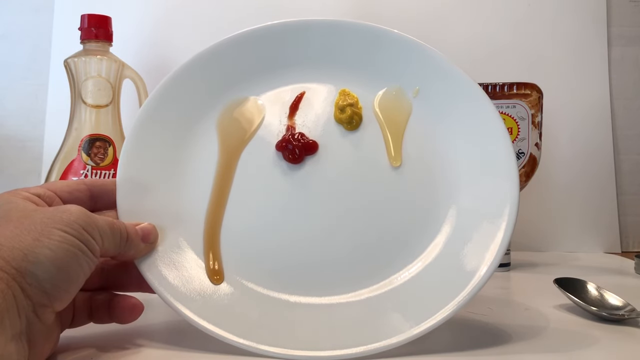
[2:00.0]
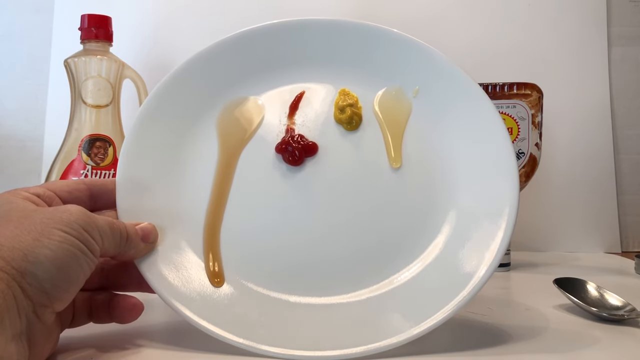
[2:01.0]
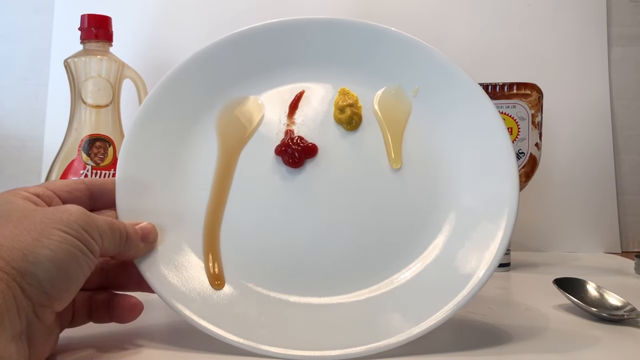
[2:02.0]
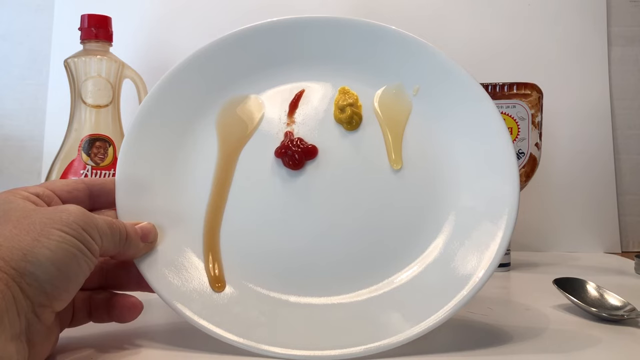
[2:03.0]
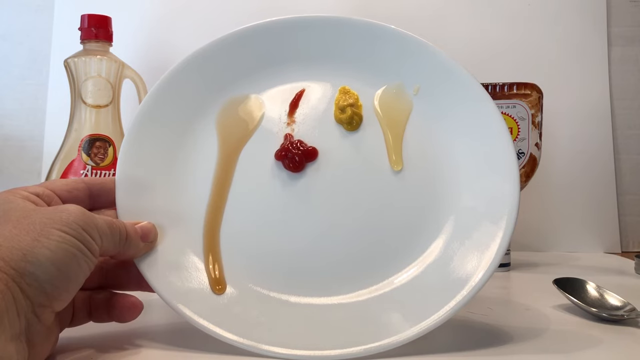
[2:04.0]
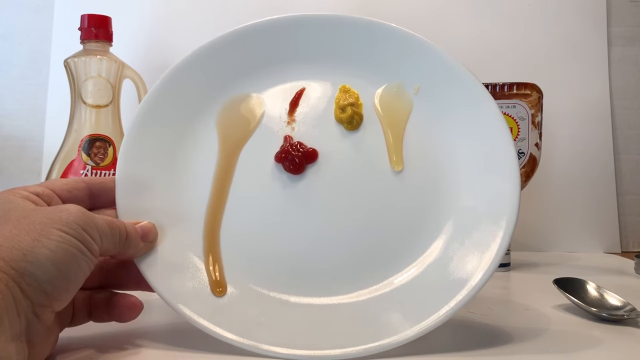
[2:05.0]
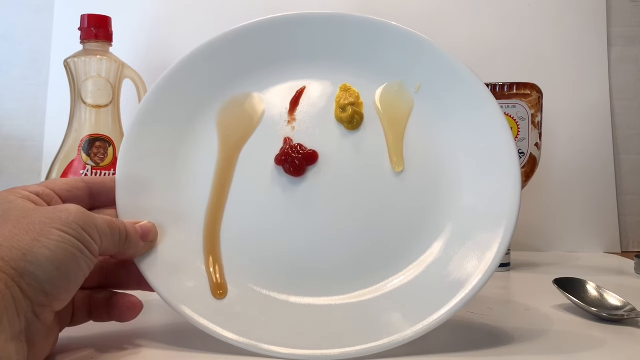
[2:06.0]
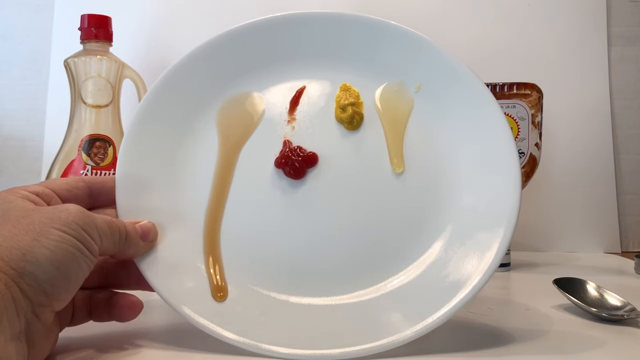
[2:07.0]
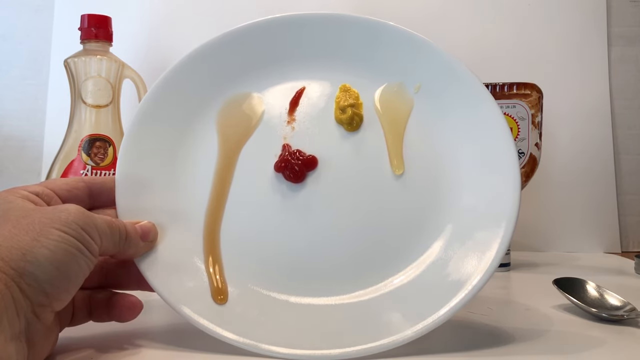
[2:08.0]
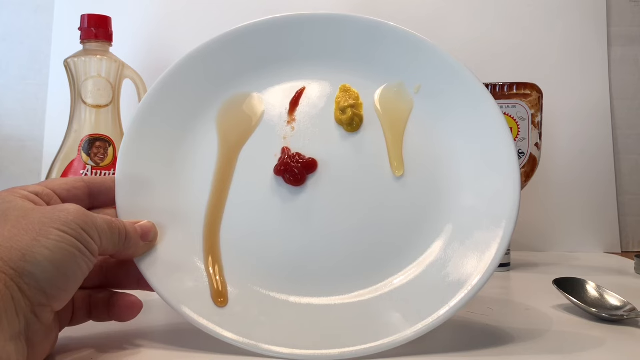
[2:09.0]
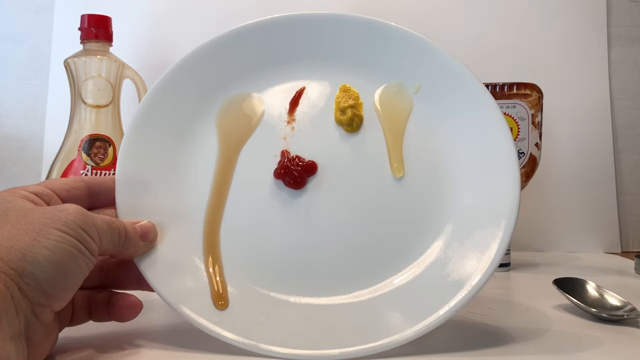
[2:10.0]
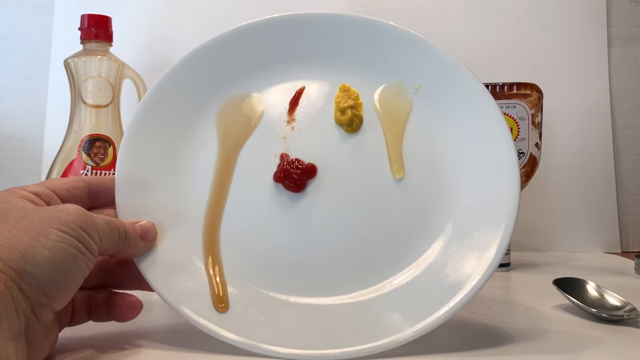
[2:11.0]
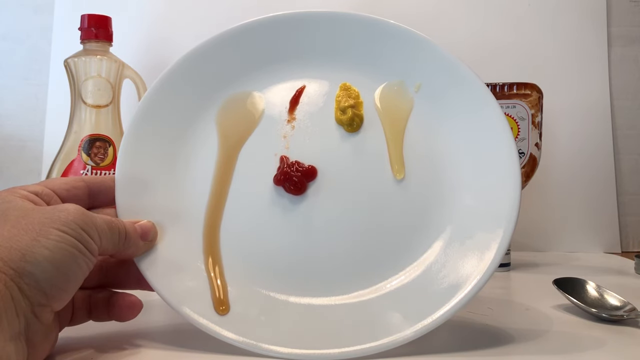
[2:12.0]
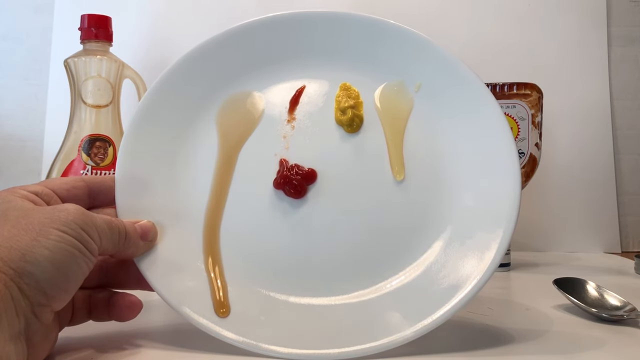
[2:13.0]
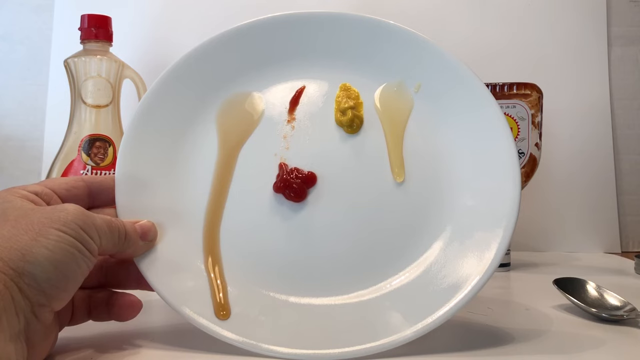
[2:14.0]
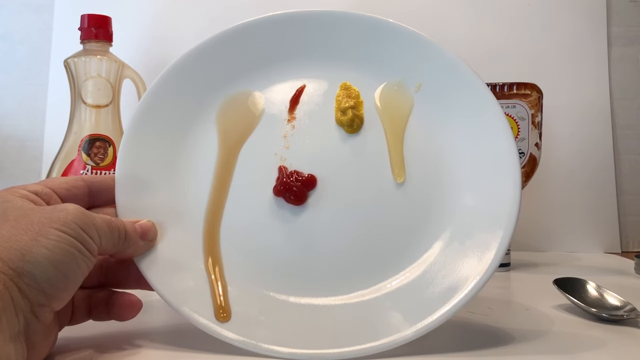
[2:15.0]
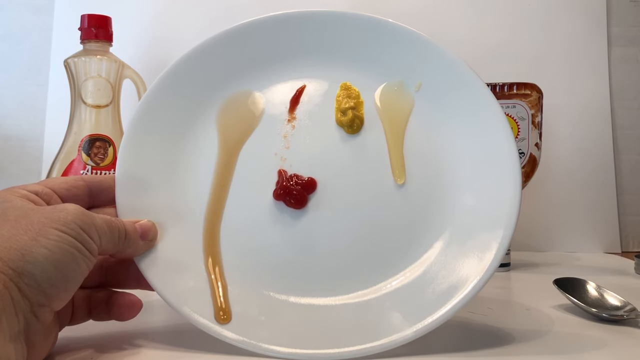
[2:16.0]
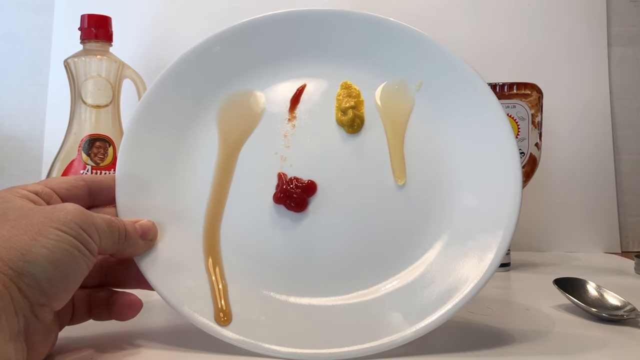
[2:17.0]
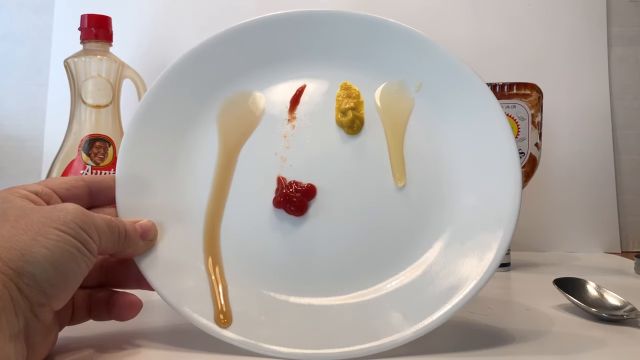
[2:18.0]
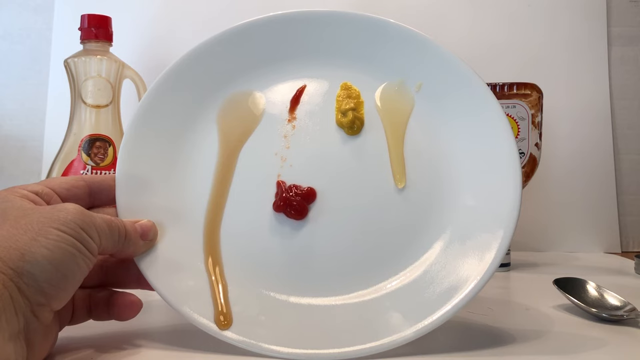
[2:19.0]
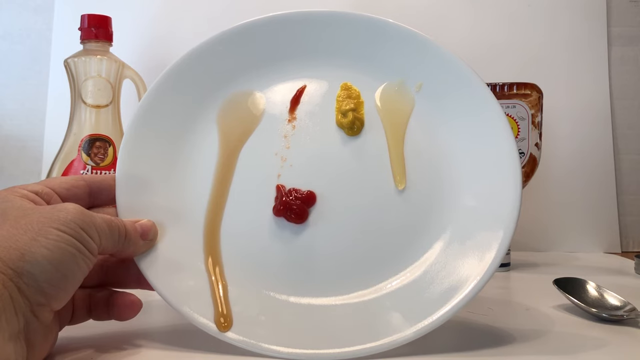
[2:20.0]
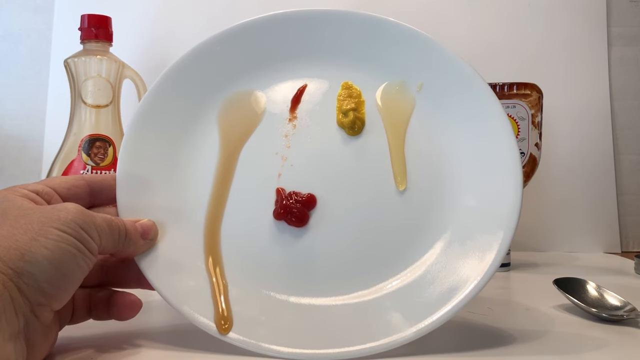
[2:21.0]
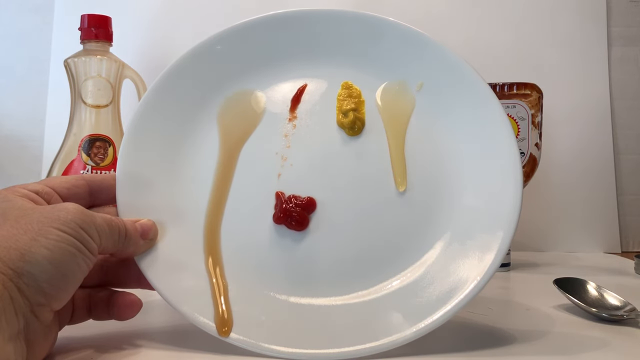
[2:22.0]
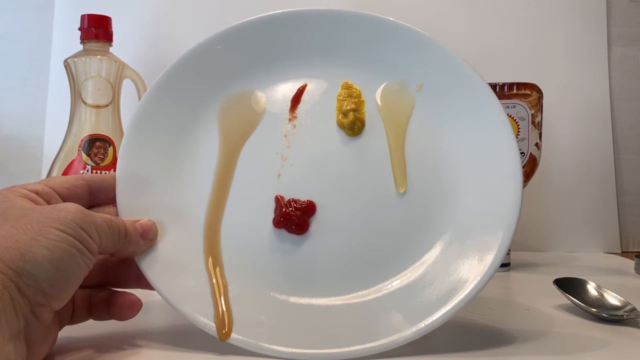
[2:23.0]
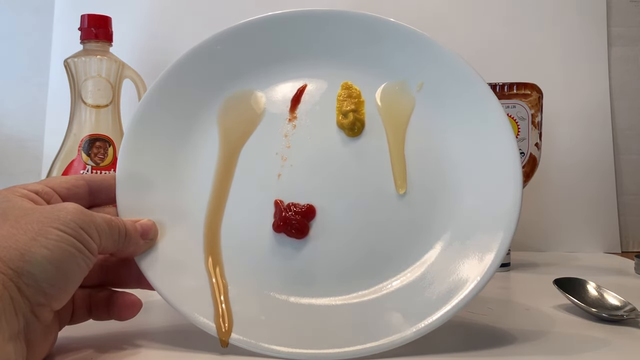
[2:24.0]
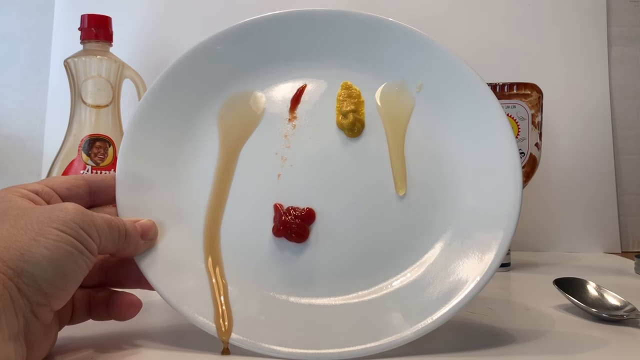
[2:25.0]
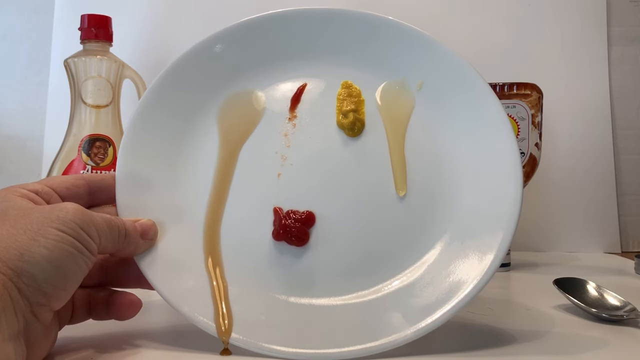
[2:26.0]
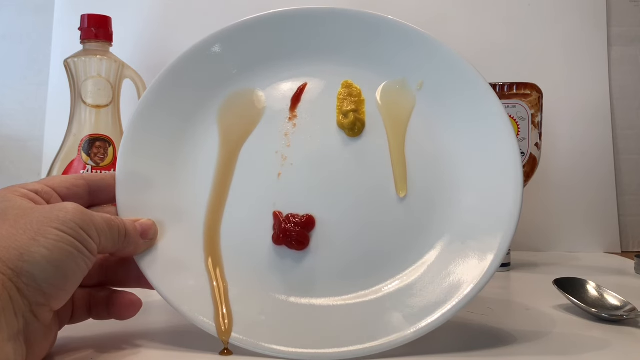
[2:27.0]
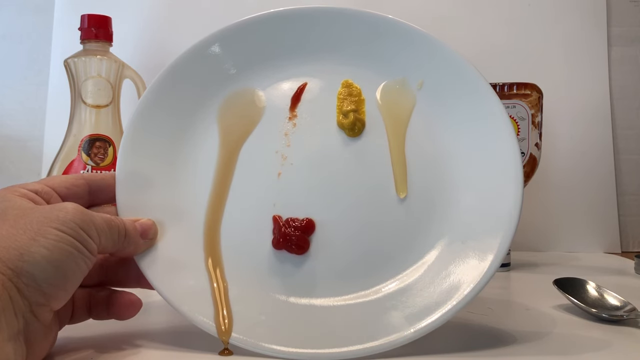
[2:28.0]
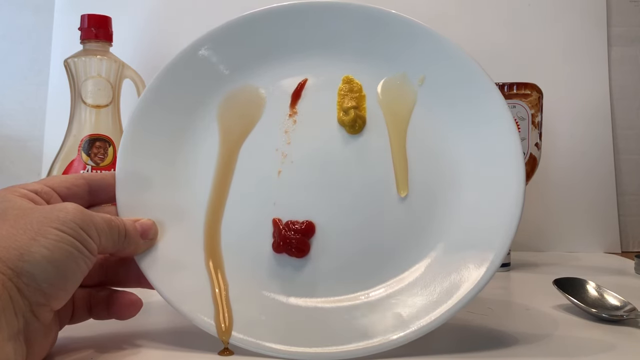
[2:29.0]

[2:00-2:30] The man holds the plate from the bottom left corner with his left hand. The syrup is partially hidden by his hand, the mustard and honey are completely hidden by the plate, and the barbecue sauce on the far right is partially hidden by the plate. The syrup is in the lead, followed by either the ketchup or the honey, while the mustard stays put. He shakes the plate slightly with his left hand, holding it on the left side slightly toward the bottom. The ketchup drips fast, but the syrup is still way ahead; the honey is behind, and the mustard is in last place. The syrup drips off the plate onto the counter, gliding down the plate without leaving any stains, while the ketchup trails behind and starts moving faster. The mustard moves slowly and the honey tries to keep up. The man shakes the plate slightly.